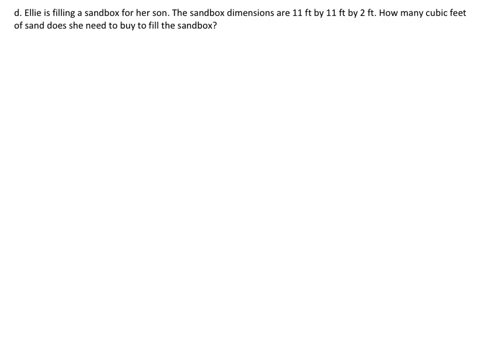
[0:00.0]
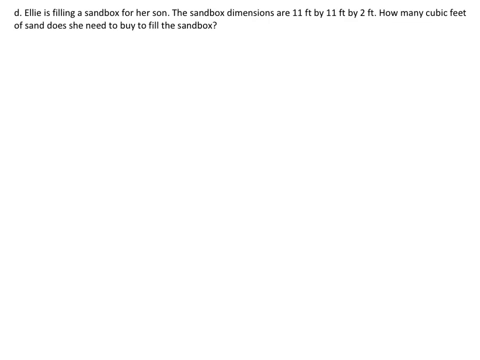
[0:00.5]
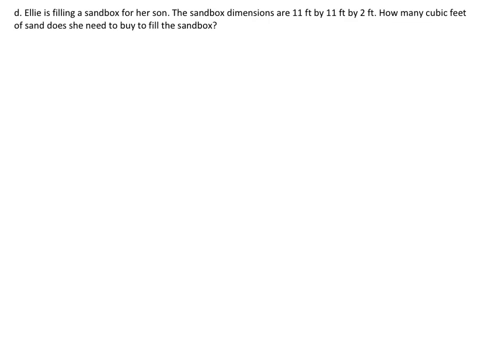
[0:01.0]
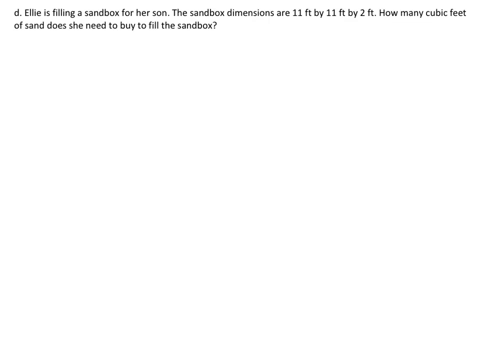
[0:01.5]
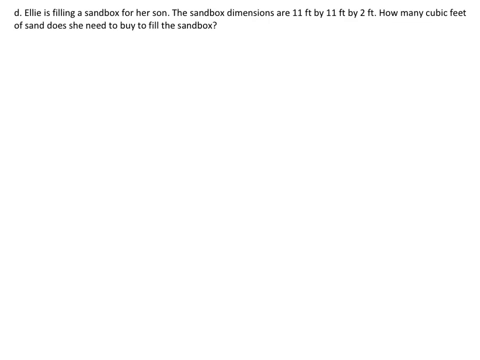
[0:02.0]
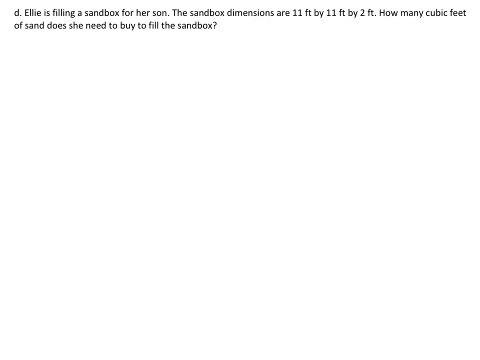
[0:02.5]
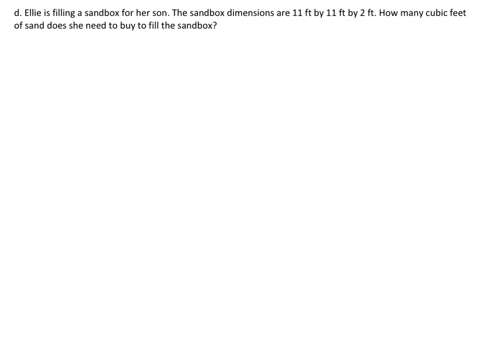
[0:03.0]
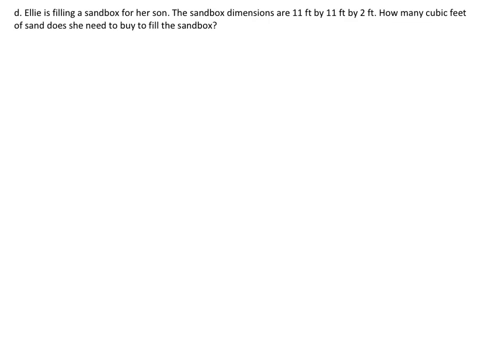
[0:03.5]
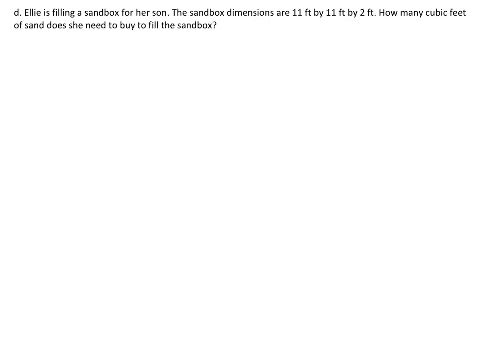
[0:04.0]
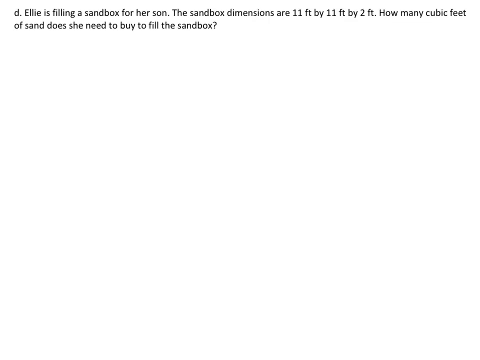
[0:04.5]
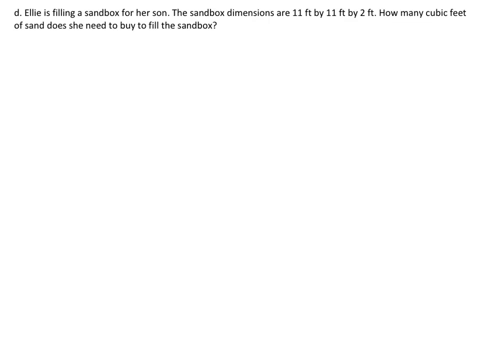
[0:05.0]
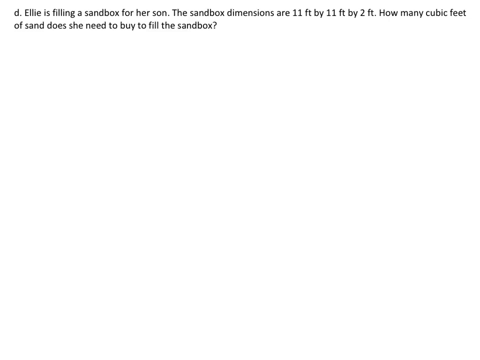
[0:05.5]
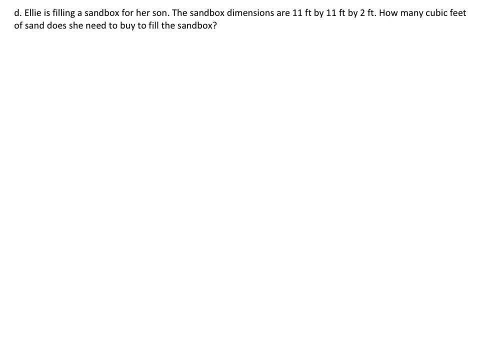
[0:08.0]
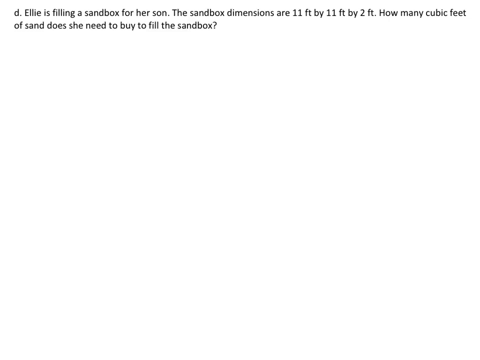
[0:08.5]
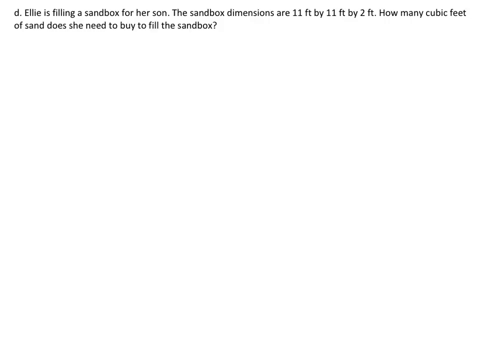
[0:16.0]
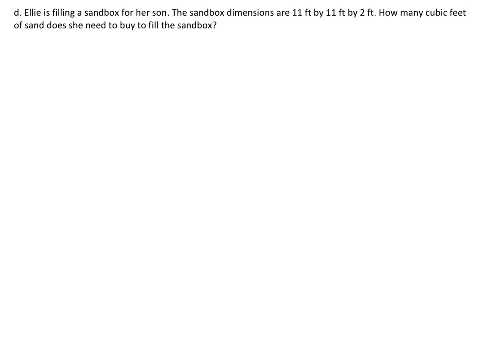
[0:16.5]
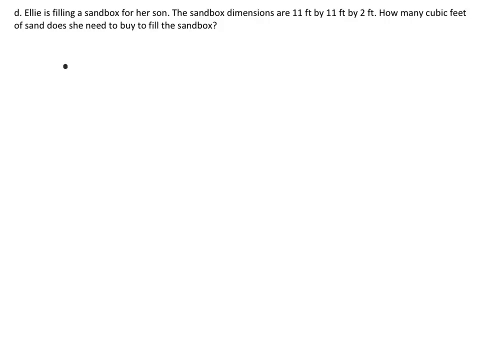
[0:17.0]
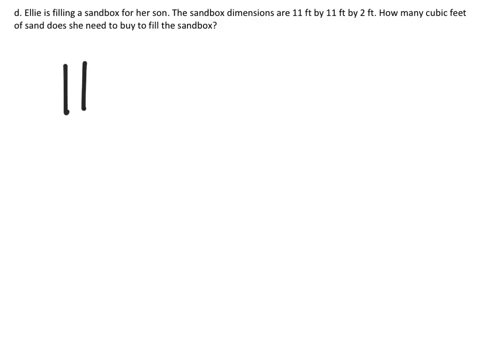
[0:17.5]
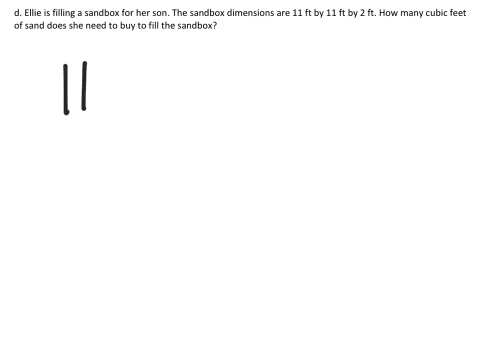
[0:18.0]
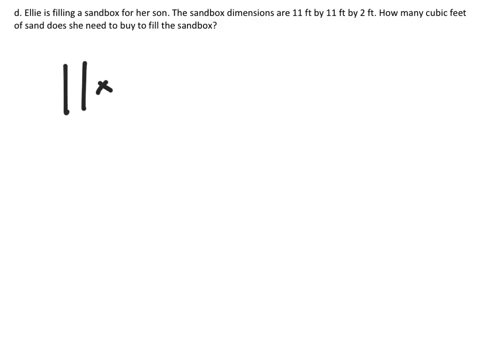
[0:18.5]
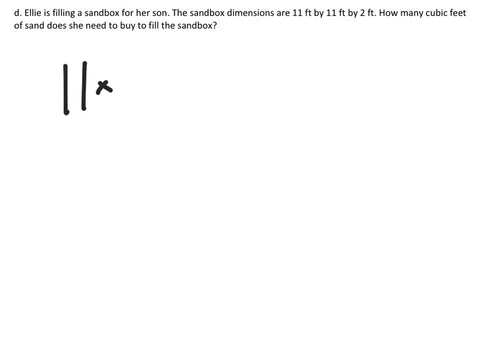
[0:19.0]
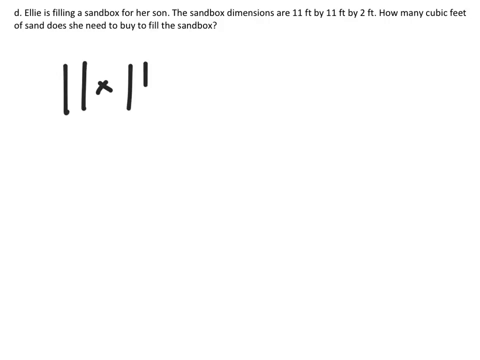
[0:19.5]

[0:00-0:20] The video shows a white background in the center with large black side borders. The letter "D." appears, followed by the text "Ellie is filling a sandbox for her son. The sandbox dimensions are 11 foot by 11 foot by 2 foot. How many cubic feet of sand does she need to buy to fill the sandbox?" There is a lot of space underneath the question. Writing then begins, and the numbers 11 times 11 appear at the bottom.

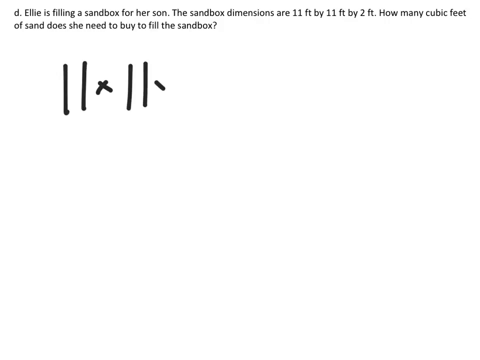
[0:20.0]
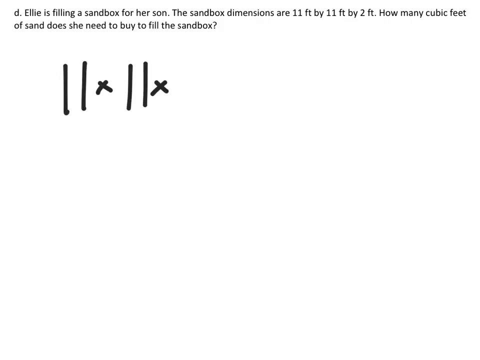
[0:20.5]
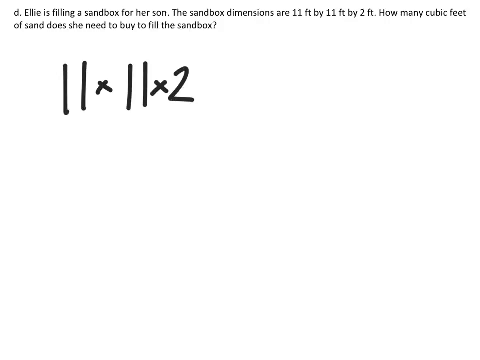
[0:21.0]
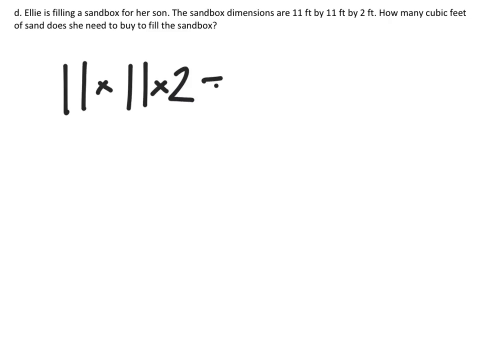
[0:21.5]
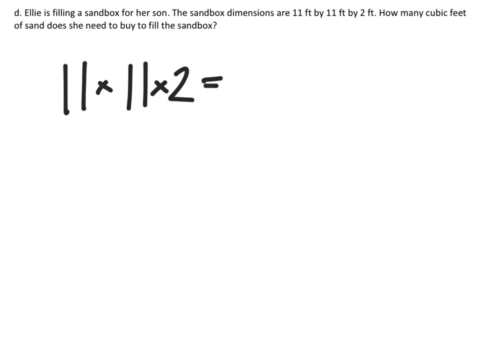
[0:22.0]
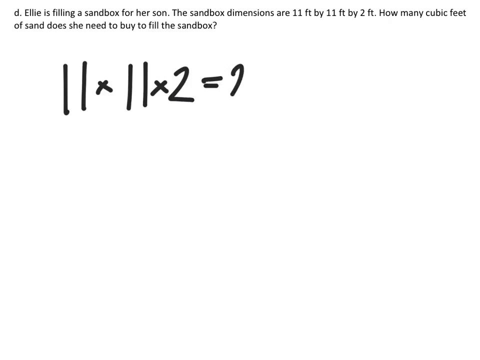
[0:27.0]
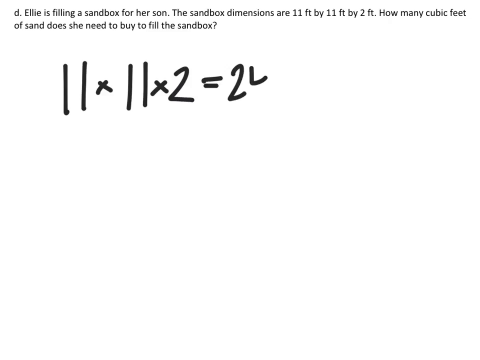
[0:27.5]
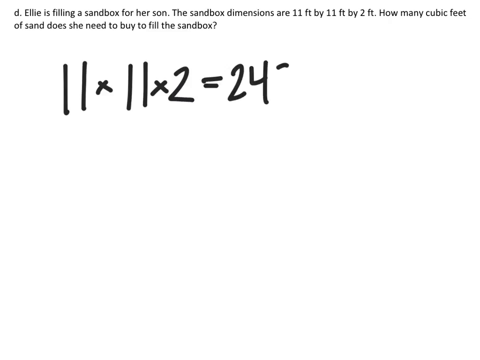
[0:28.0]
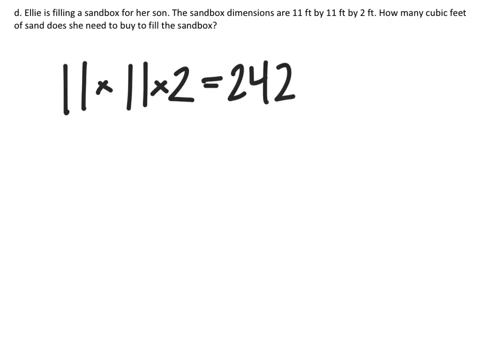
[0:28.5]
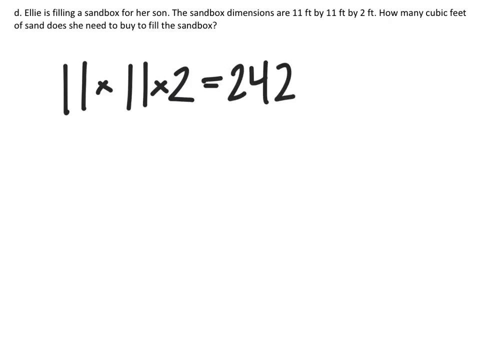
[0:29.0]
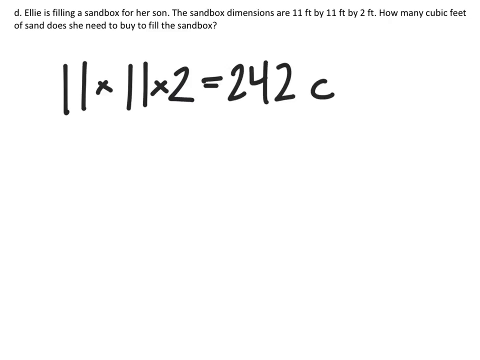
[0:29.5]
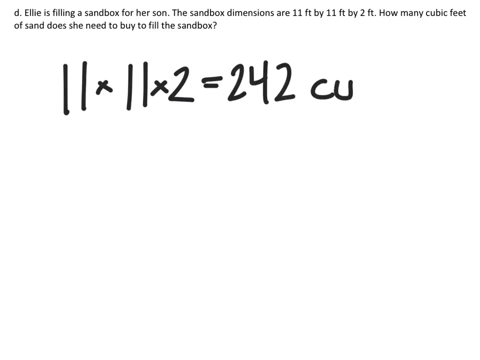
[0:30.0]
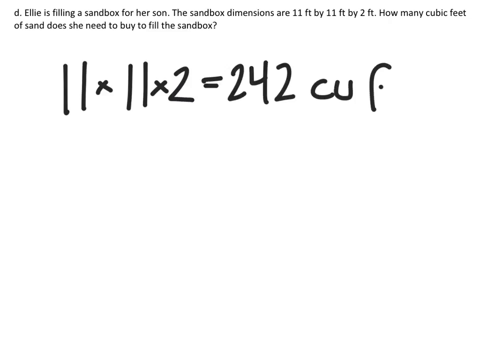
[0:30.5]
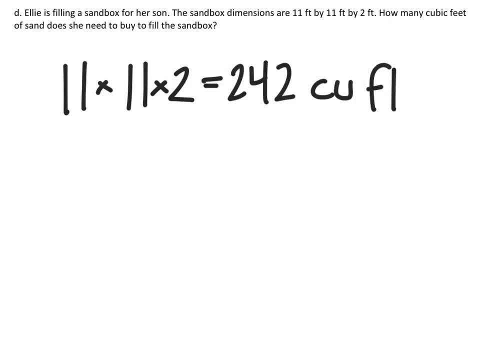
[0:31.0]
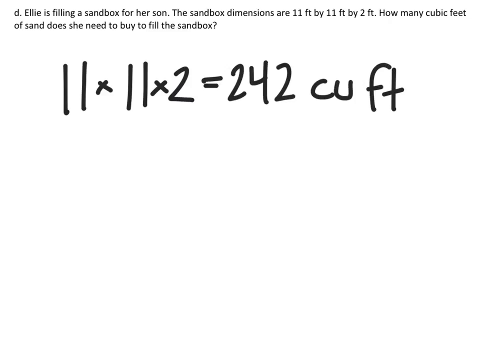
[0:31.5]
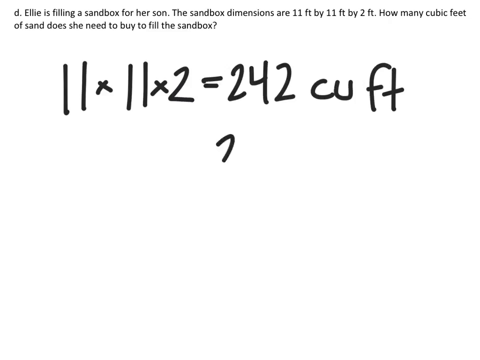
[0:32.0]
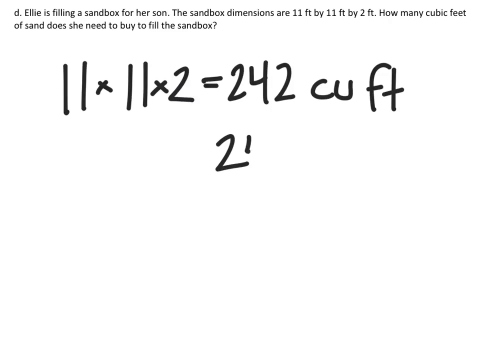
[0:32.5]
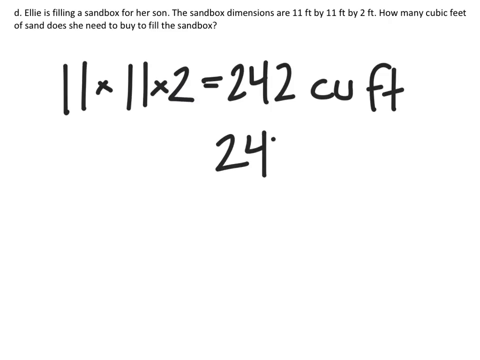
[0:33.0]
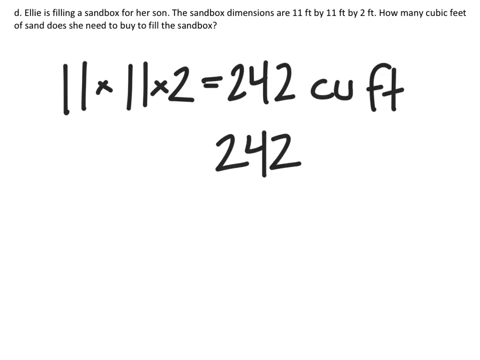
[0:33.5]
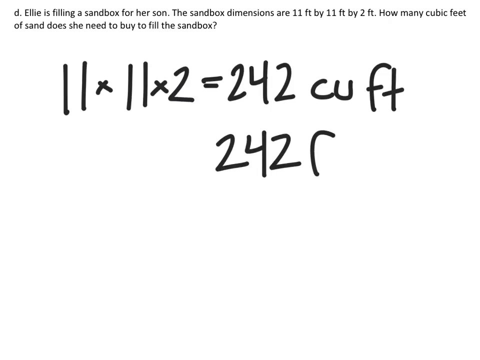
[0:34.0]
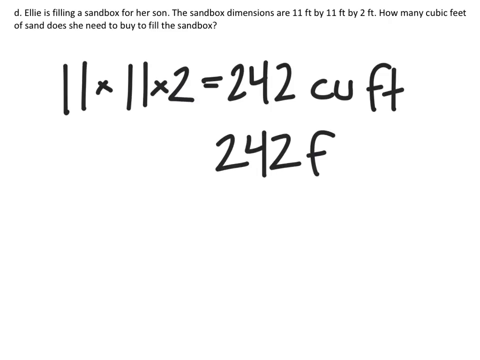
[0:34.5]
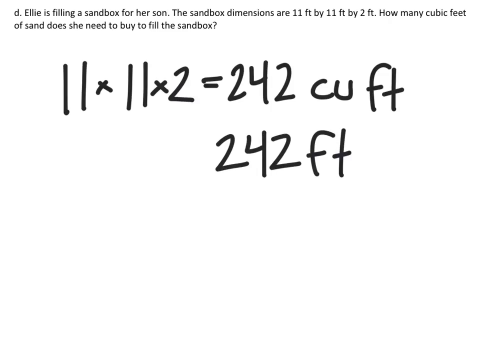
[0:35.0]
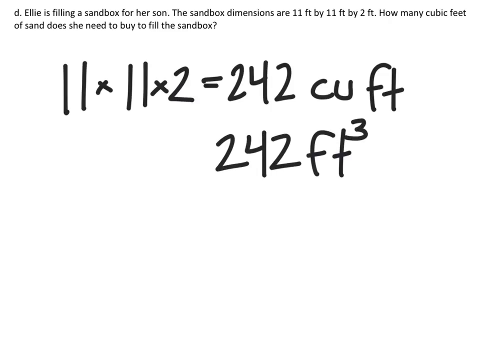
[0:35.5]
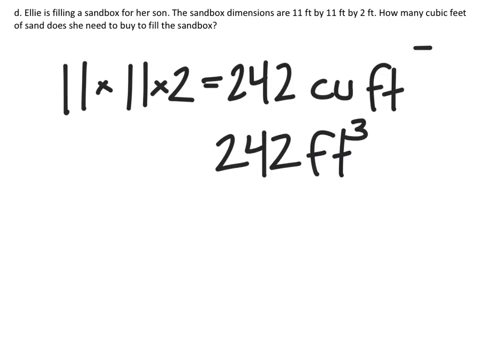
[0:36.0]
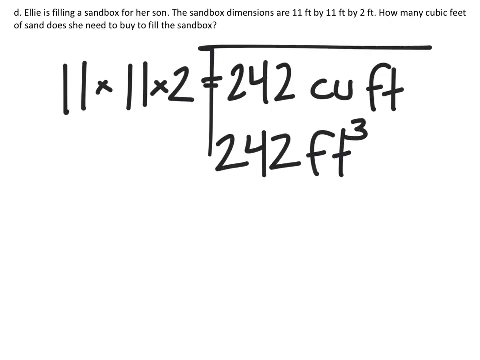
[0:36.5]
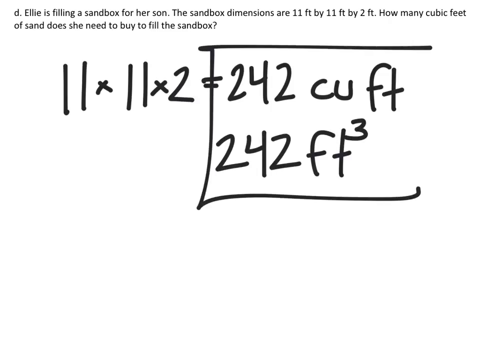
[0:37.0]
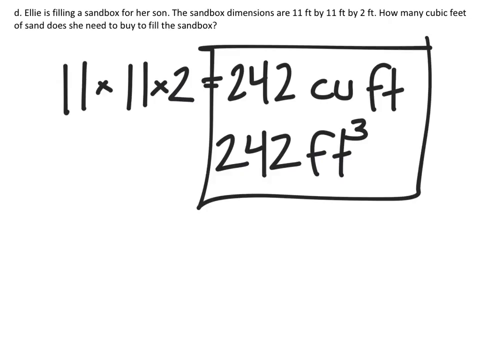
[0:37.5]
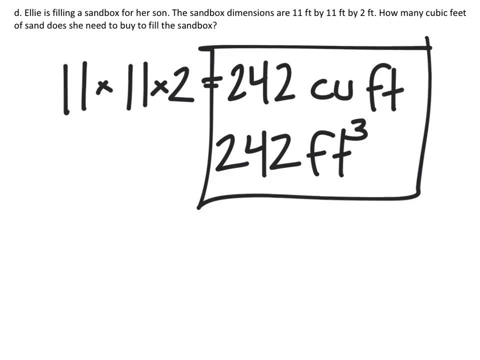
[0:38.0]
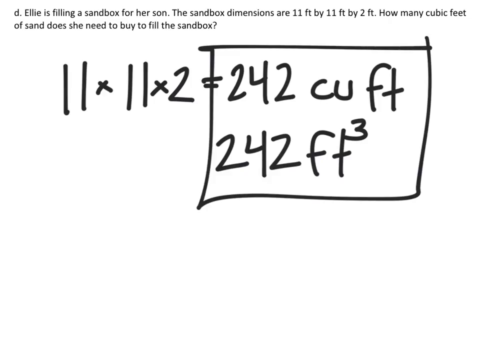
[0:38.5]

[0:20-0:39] The background is white, with white borders on each side. A question marked D at the top reads "Ellie is filling a sandbox for her son. The sandbox dimensions are 11 foot by 11 foot by 2 foot. How many cubic feet of sand does she need to buy to fill the sandbox?" There is a blank space at the bottom of the page. In that space, 11 times 11 times 2 equals 242 cubic feet is written out, and the final answer at the bottom is written as 242 ft to the third power.